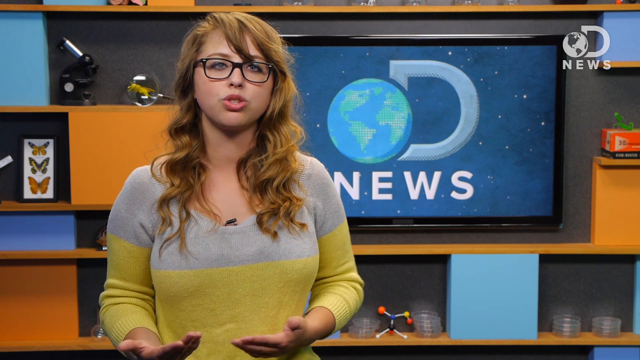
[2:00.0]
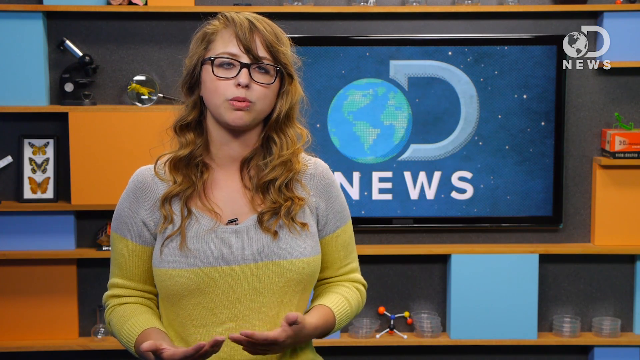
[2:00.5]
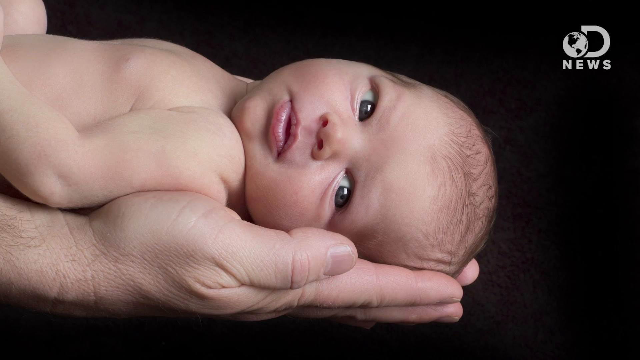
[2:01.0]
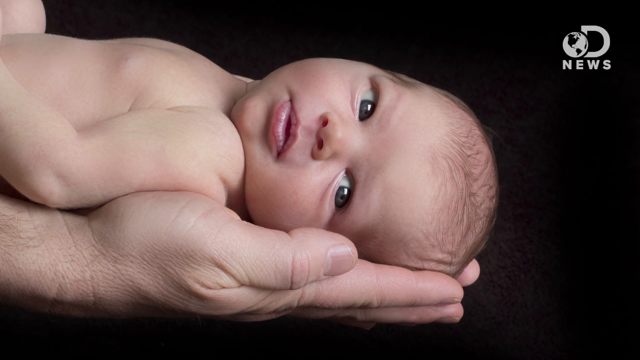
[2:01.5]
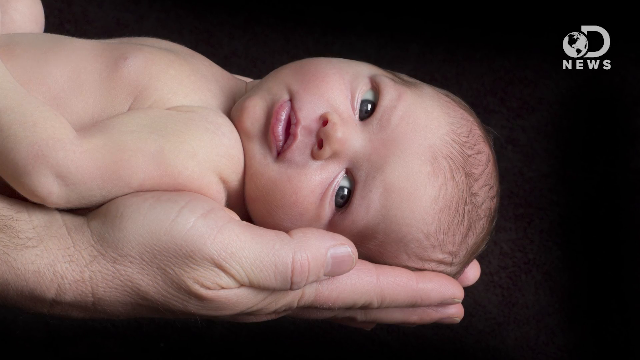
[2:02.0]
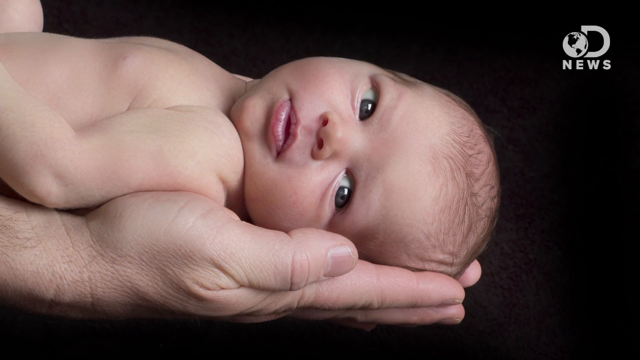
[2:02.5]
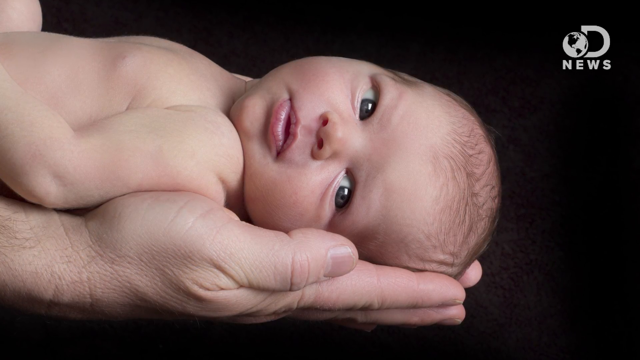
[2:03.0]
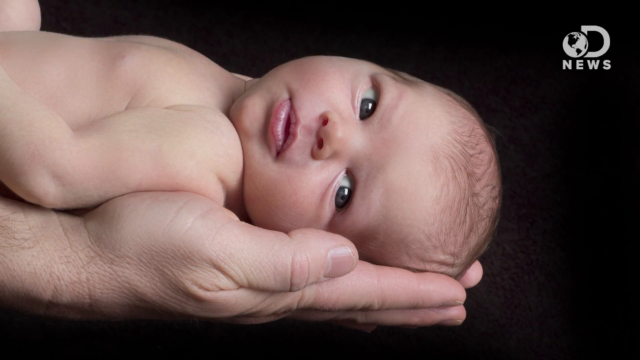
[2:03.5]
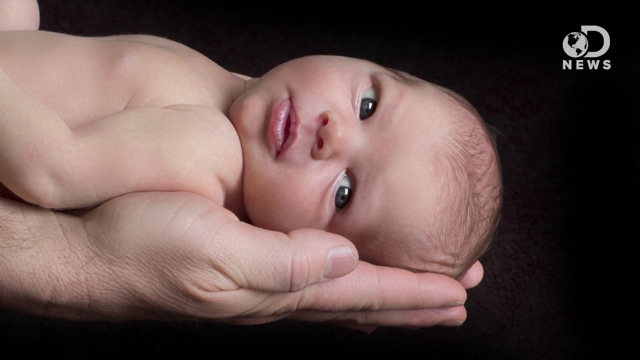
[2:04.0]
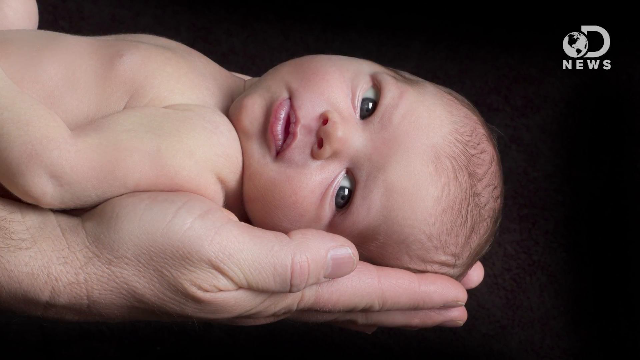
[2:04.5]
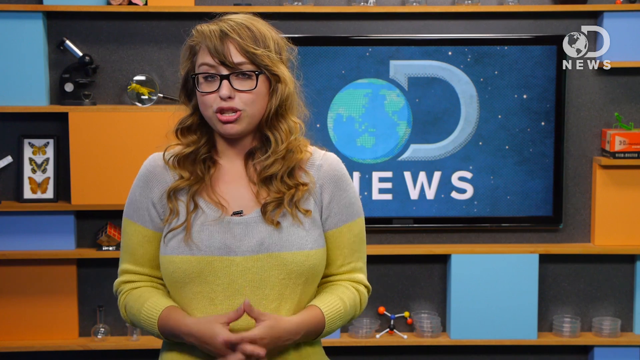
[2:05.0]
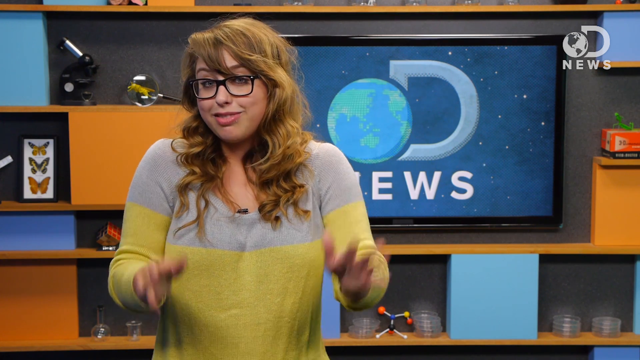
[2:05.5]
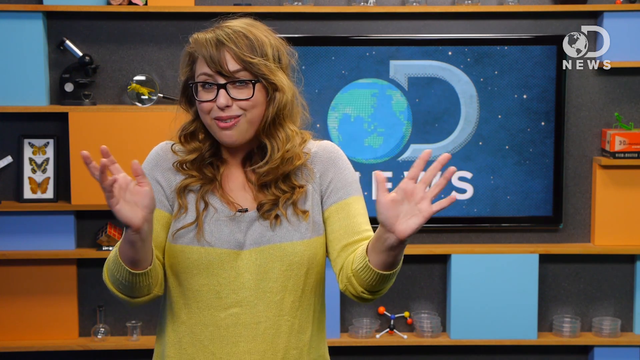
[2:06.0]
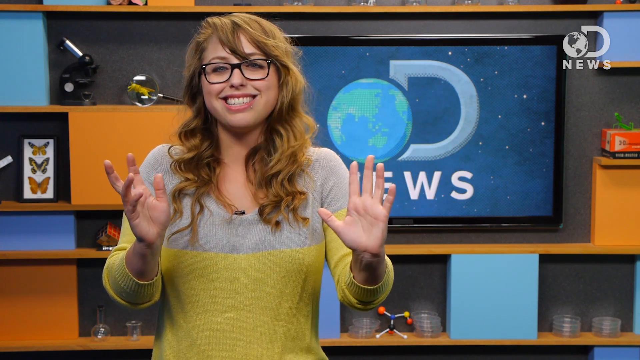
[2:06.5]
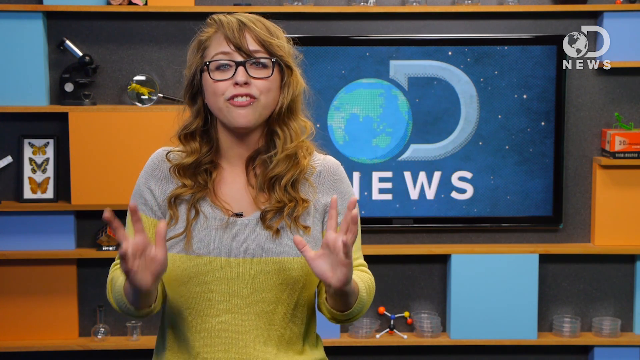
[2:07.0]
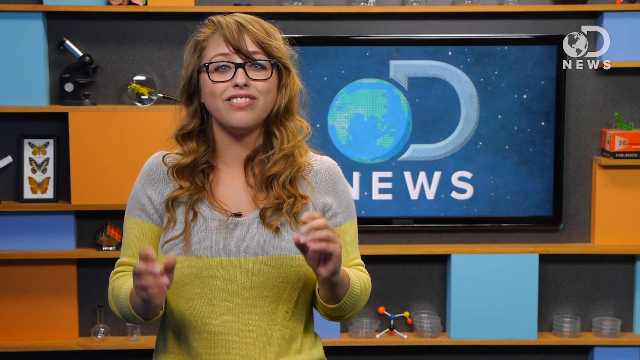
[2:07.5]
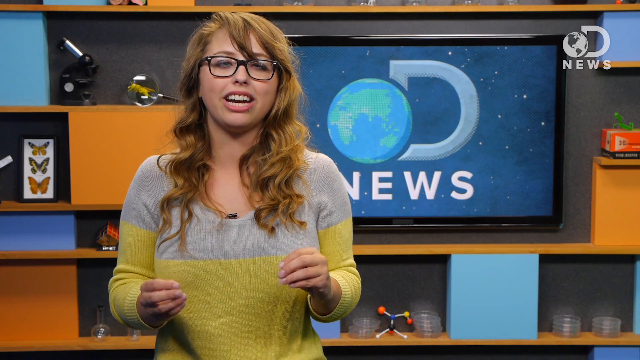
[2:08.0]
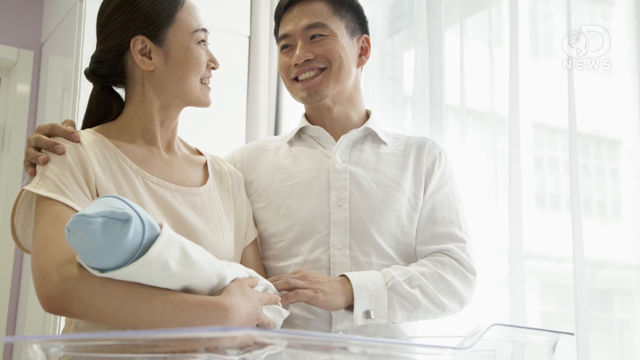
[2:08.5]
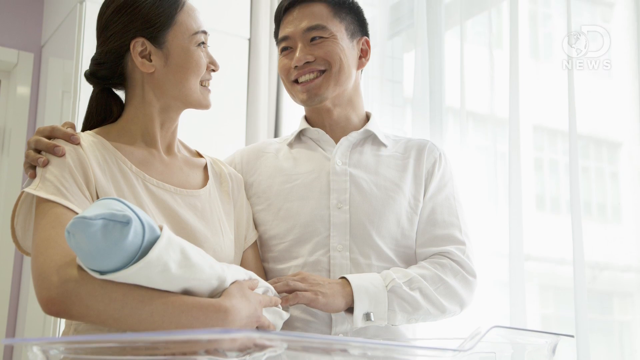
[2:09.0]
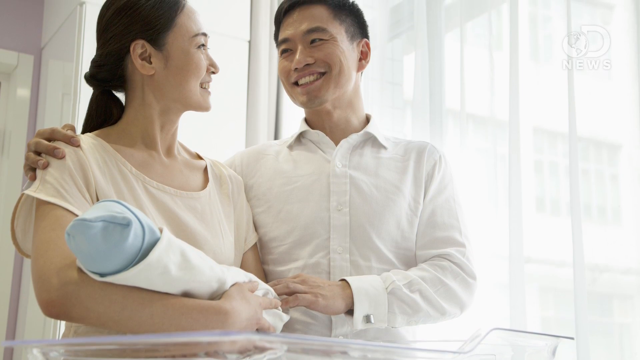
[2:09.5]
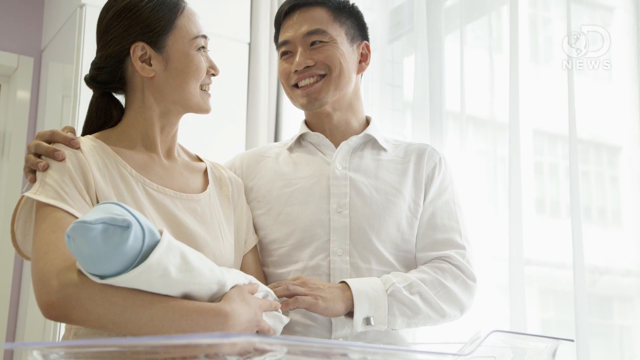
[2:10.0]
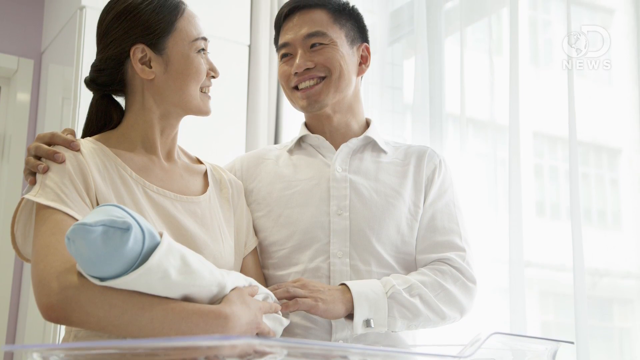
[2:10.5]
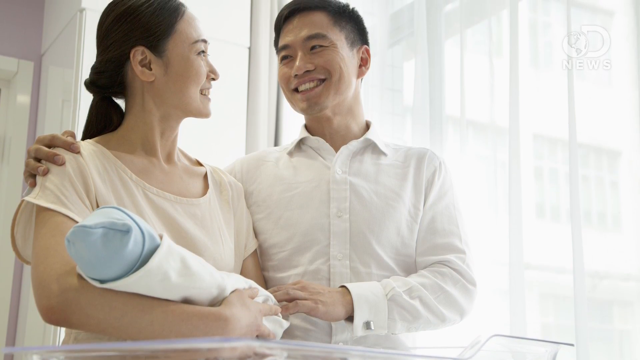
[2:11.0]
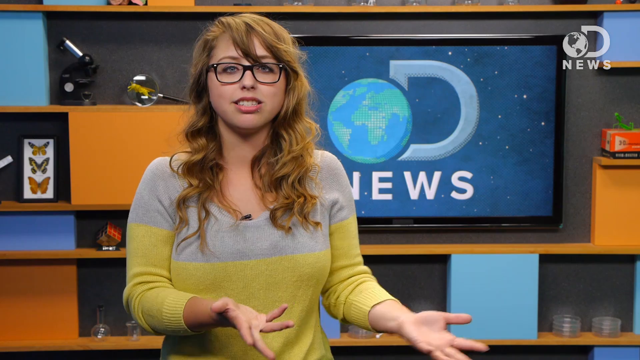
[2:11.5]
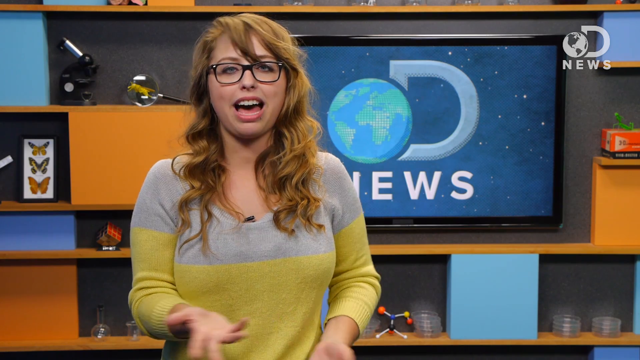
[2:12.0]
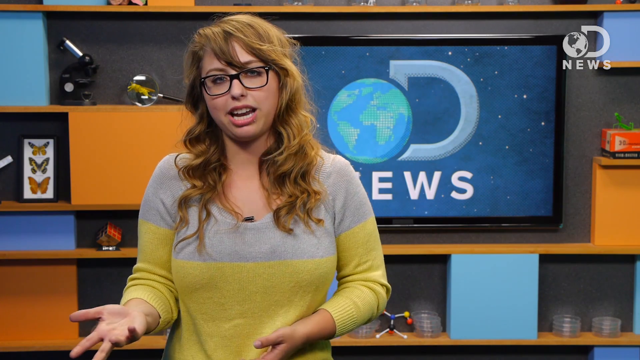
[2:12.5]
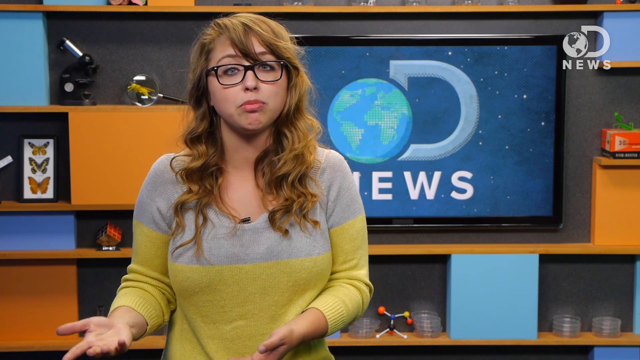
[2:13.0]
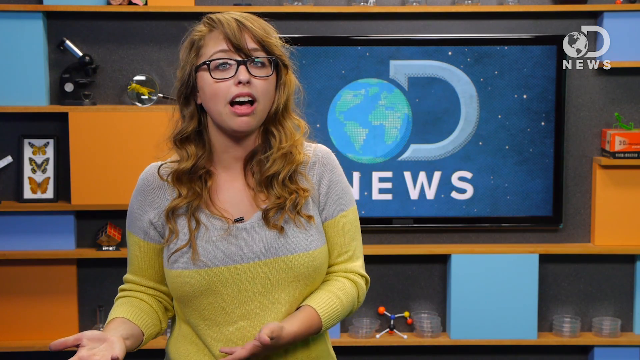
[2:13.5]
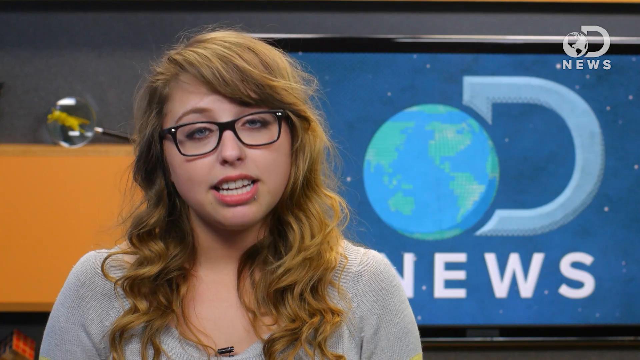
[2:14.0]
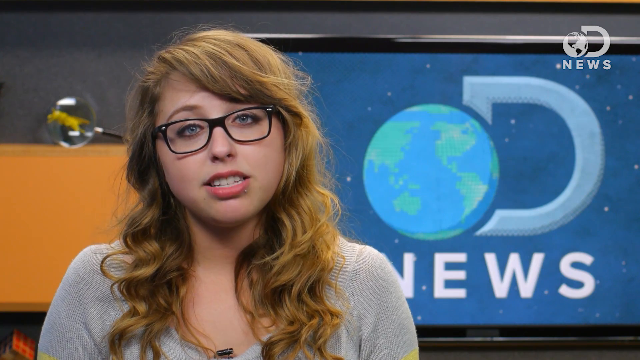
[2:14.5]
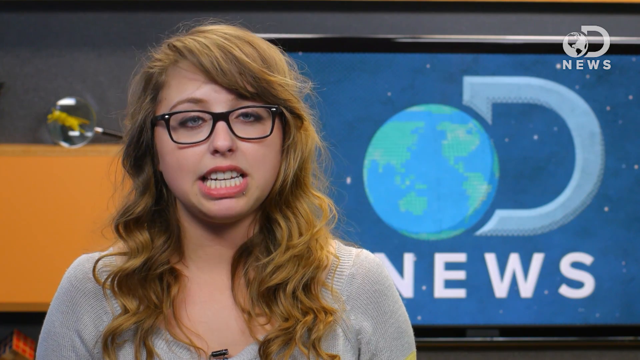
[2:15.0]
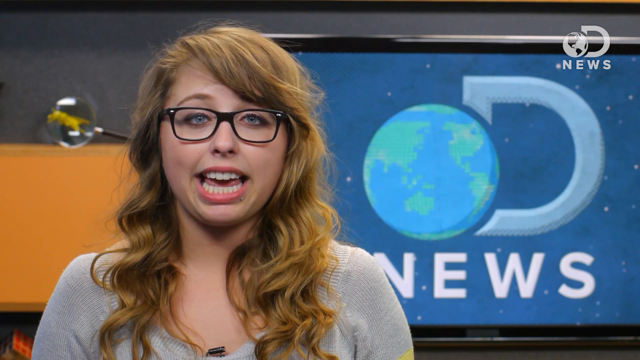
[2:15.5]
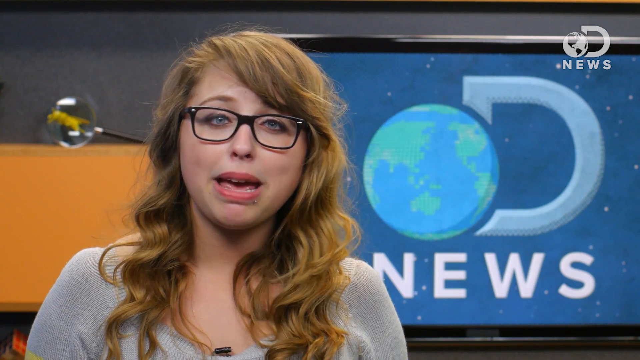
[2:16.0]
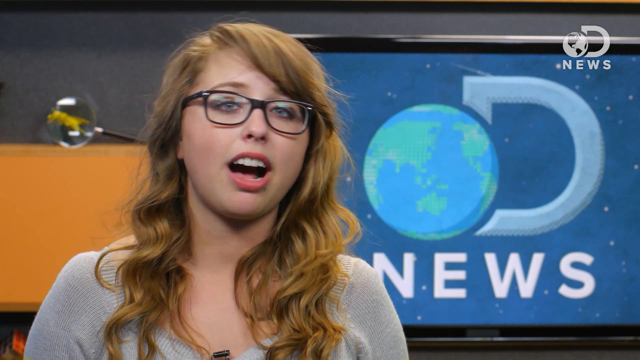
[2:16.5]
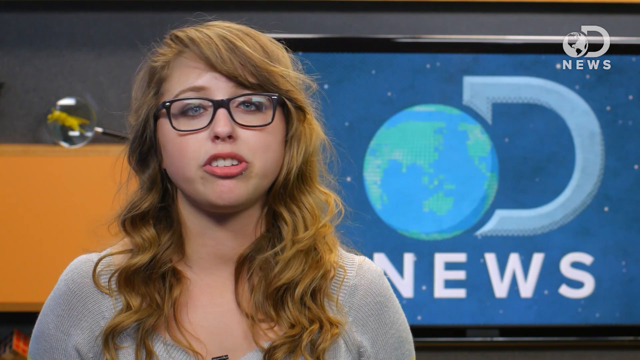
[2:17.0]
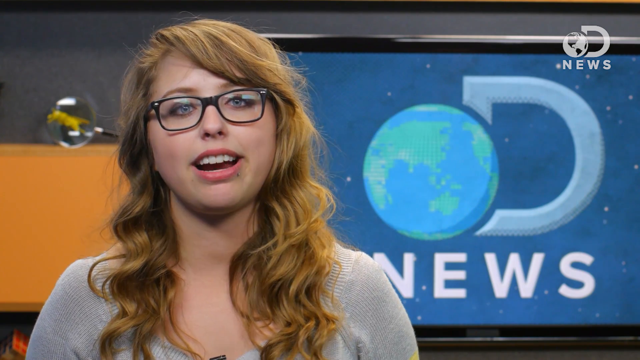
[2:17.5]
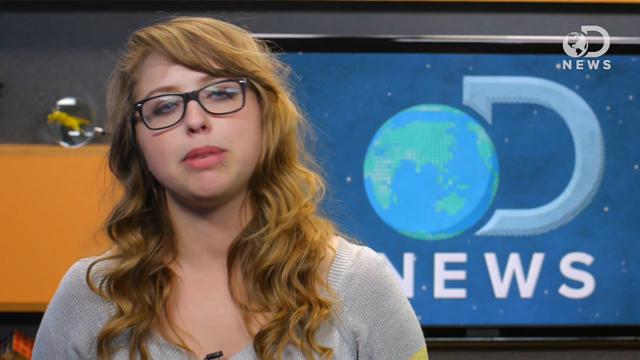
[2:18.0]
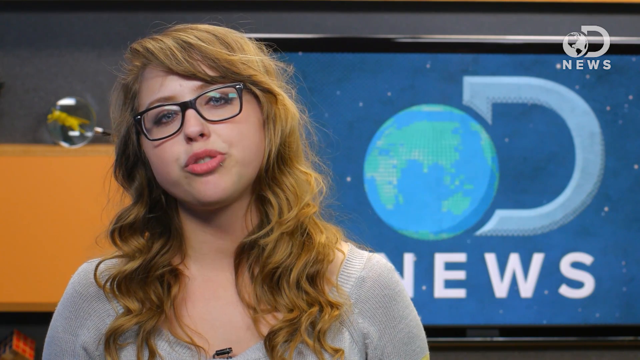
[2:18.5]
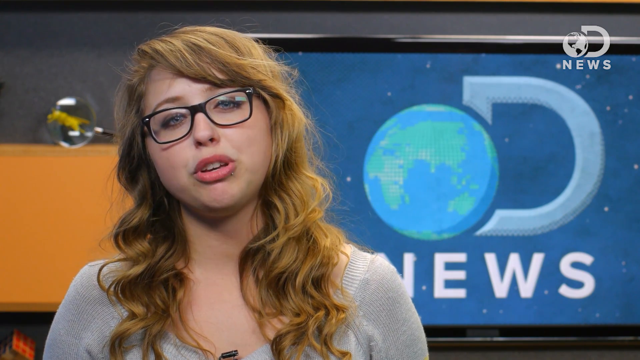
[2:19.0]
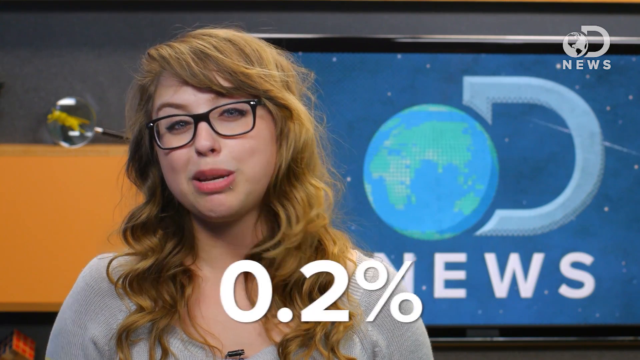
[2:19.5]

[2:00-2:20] The scientific news reporter, Lori, speaks while gesturing expressively with her hands. Next is a newborn baby lying on its back and looking toward the camera against a black background. It has a little bit of hair and dark eyes, maybe dark gray, and it looks to be resting on a hand, possibly its father's. The video pans back to Lori, and then shows two parents holding their newborn baby in what seems to be an all-white hospital room with sheer white curtains, with maybe a building outside. The mother holds the baby, which looks to be a boy because of its blue cap, and the father has his arms around her shoulders; they smile at one another. Then Lori continues talking to the audience, and "0.2%" pops up in white characters at the bottom of the screen.